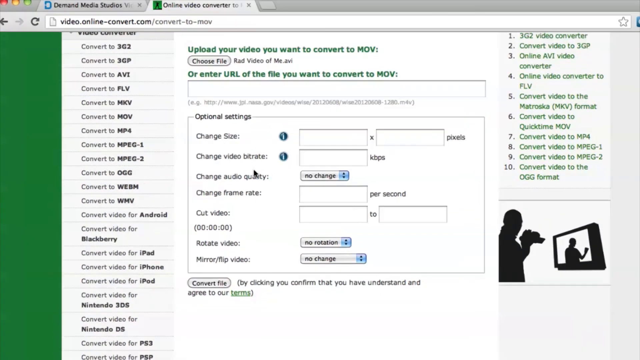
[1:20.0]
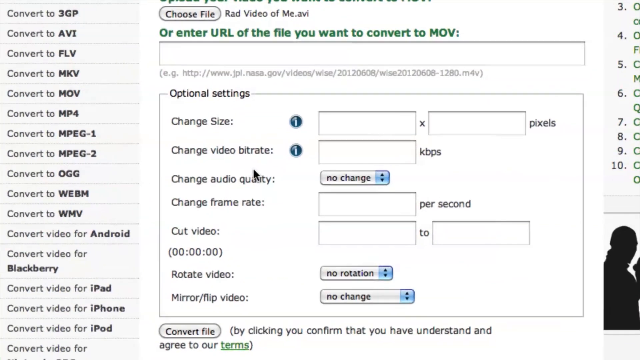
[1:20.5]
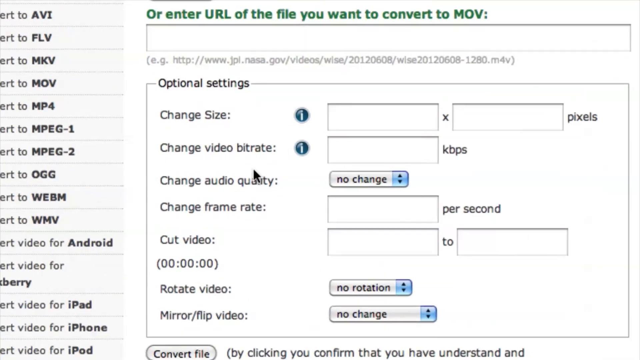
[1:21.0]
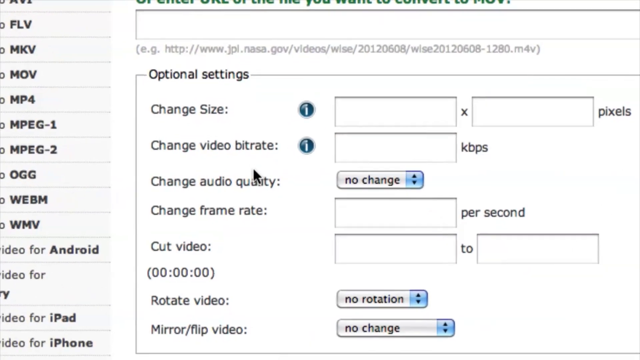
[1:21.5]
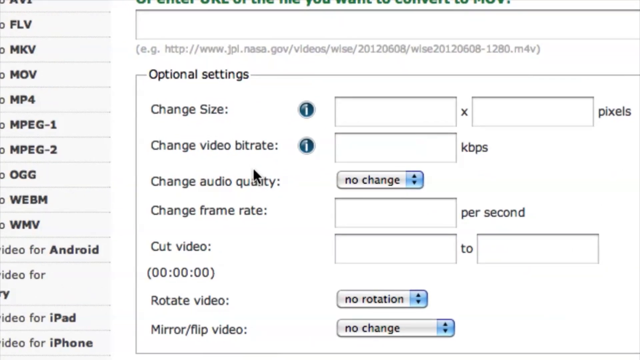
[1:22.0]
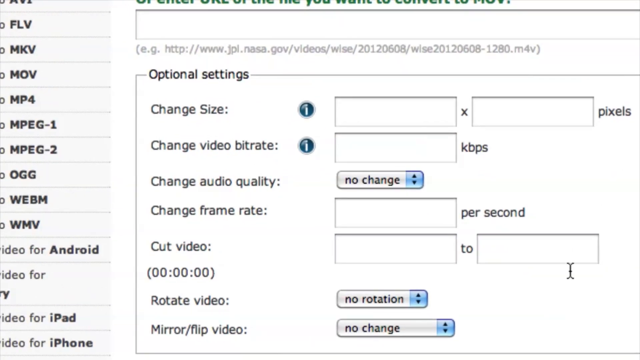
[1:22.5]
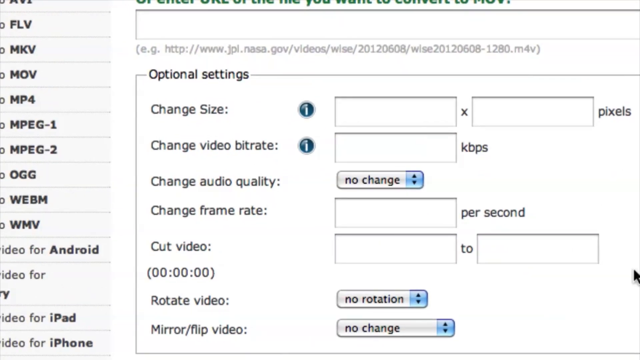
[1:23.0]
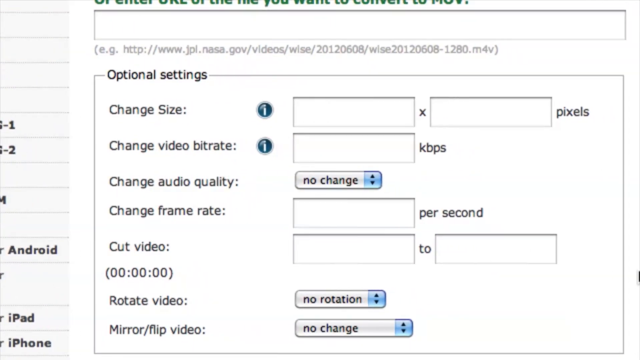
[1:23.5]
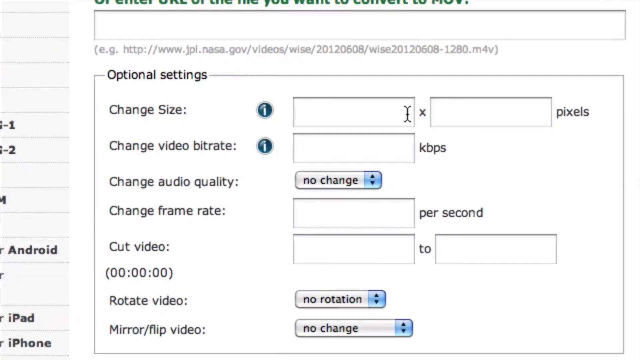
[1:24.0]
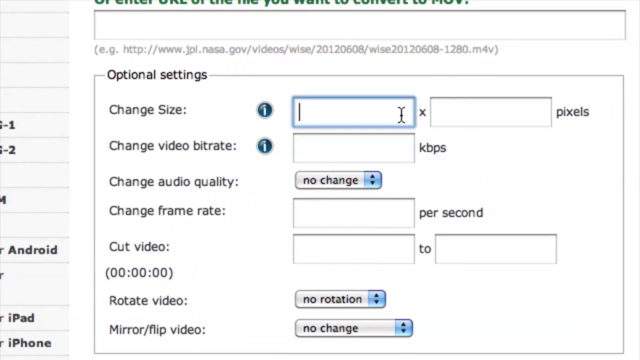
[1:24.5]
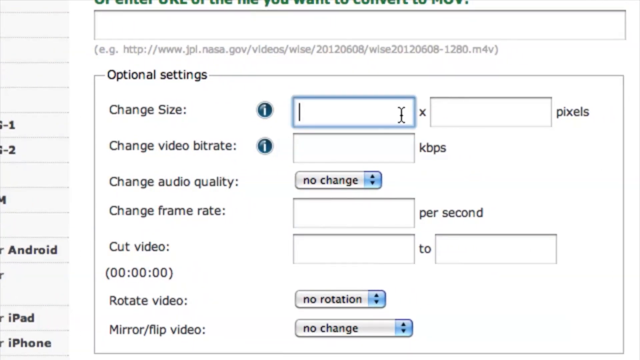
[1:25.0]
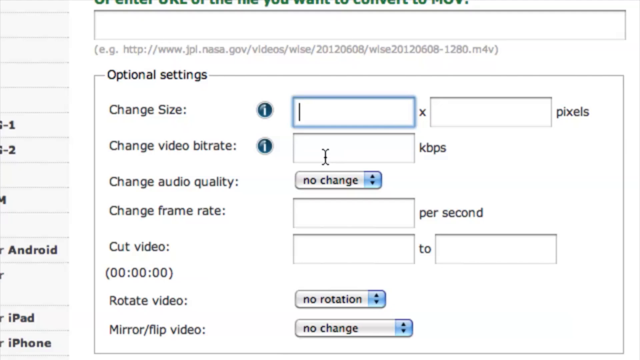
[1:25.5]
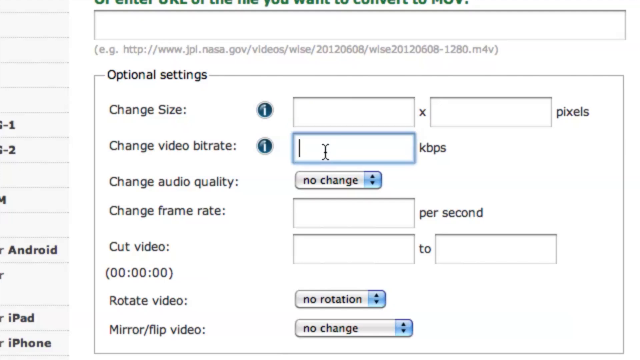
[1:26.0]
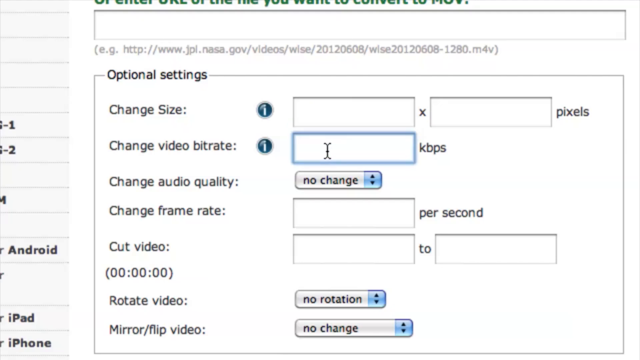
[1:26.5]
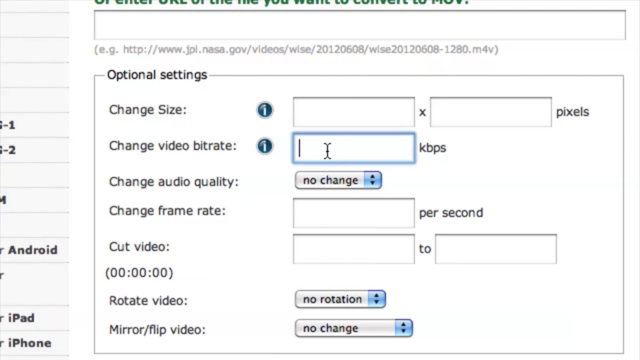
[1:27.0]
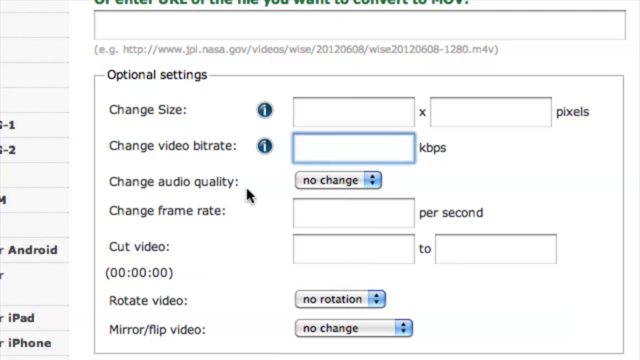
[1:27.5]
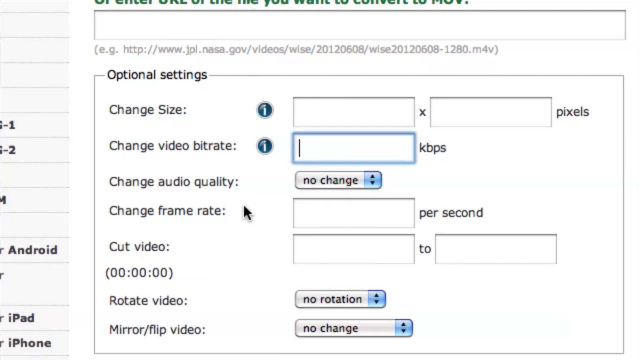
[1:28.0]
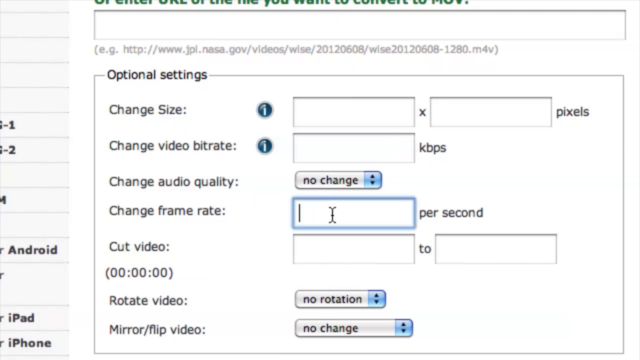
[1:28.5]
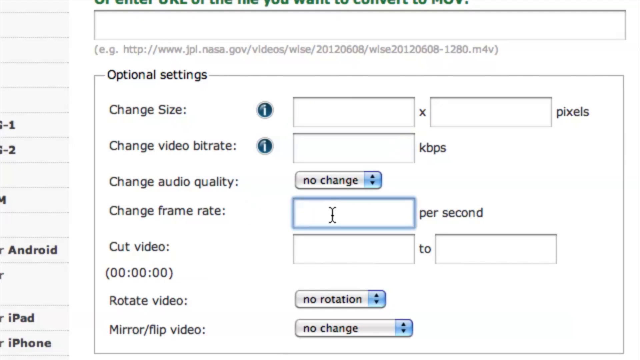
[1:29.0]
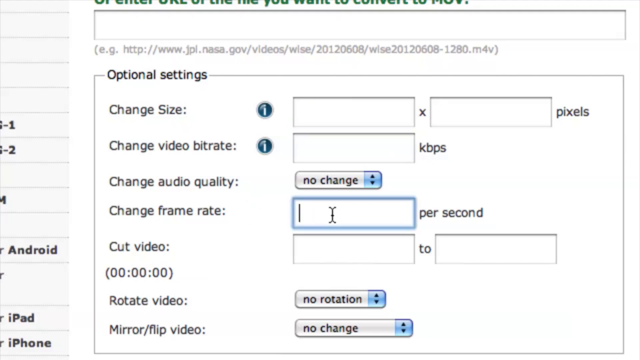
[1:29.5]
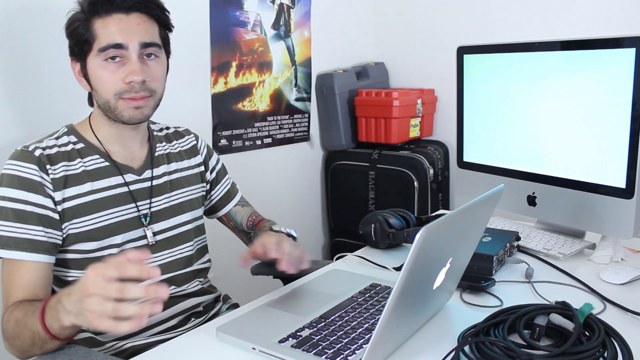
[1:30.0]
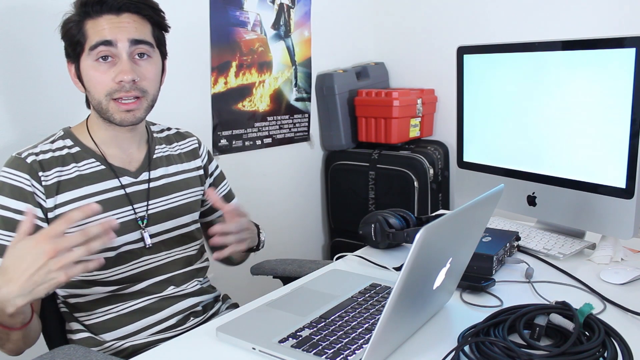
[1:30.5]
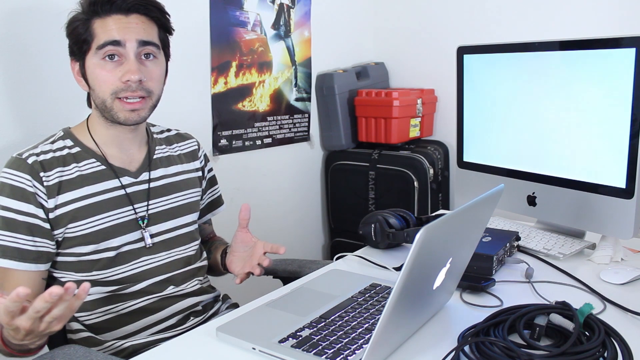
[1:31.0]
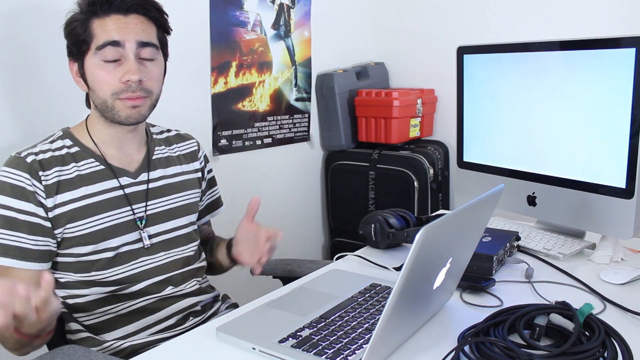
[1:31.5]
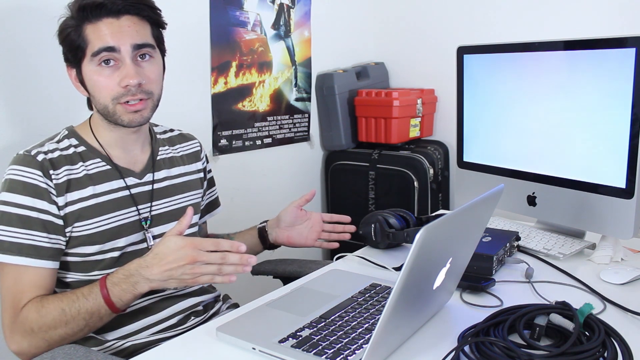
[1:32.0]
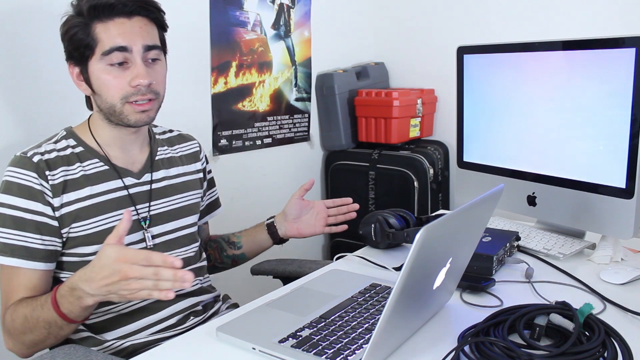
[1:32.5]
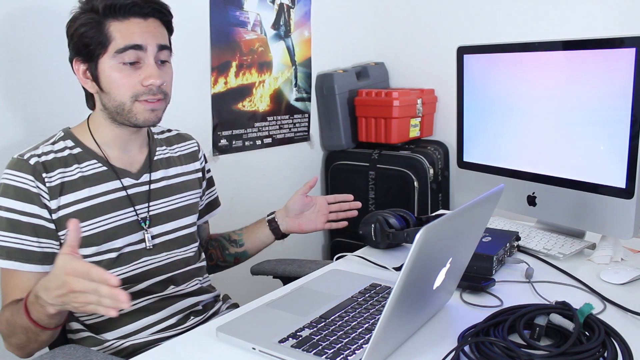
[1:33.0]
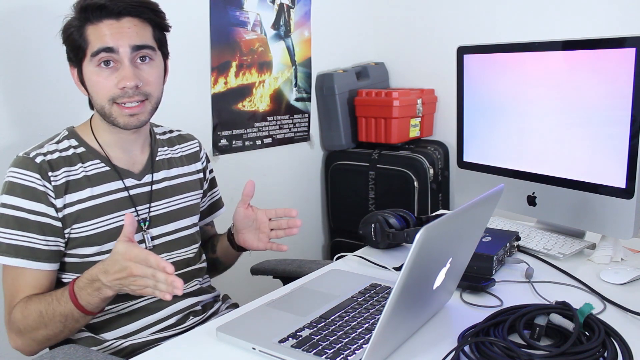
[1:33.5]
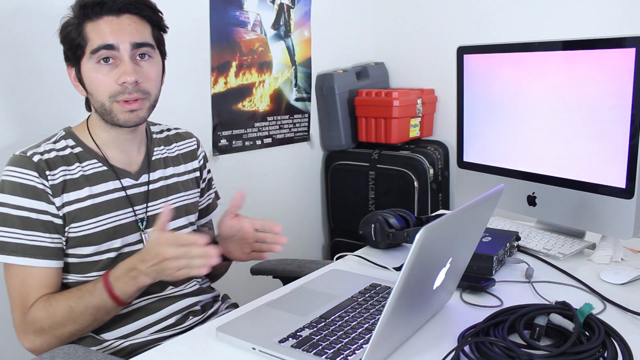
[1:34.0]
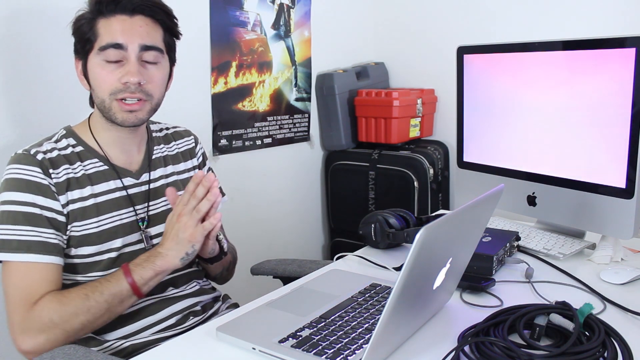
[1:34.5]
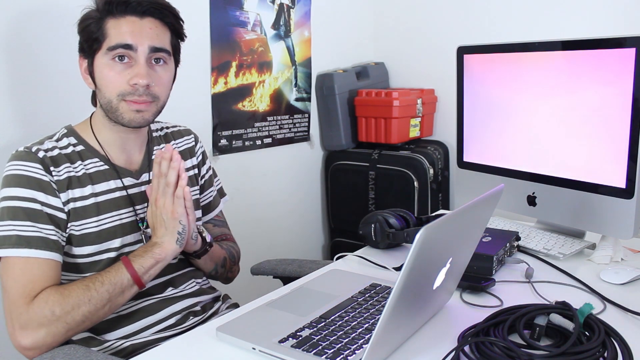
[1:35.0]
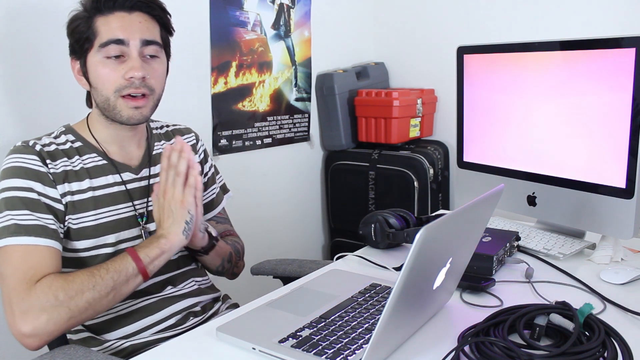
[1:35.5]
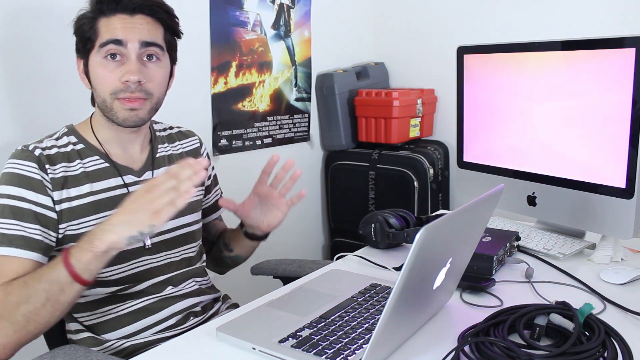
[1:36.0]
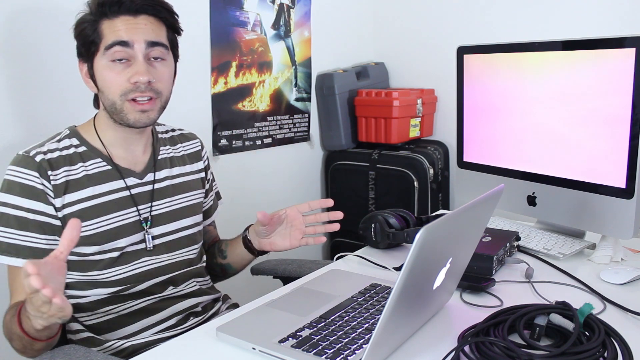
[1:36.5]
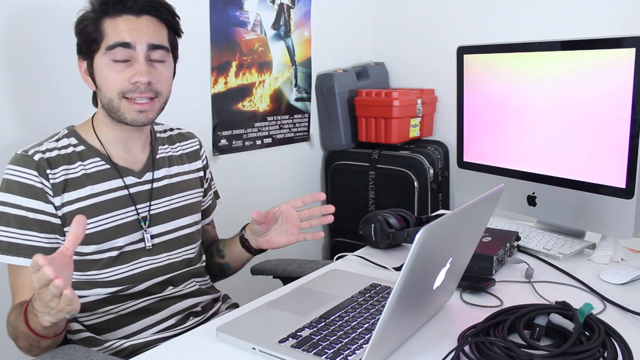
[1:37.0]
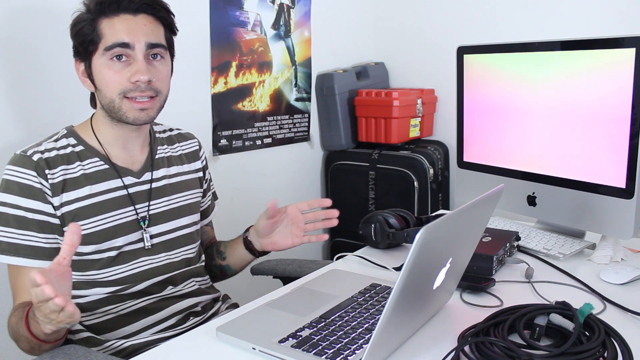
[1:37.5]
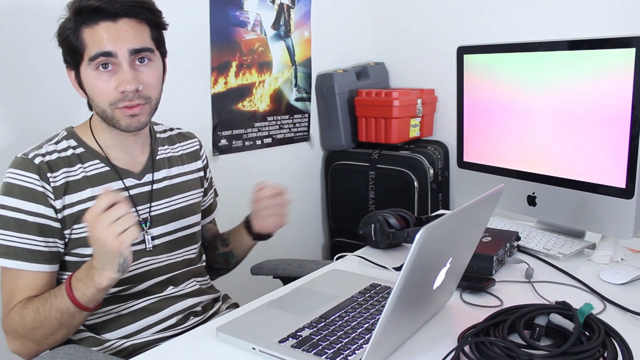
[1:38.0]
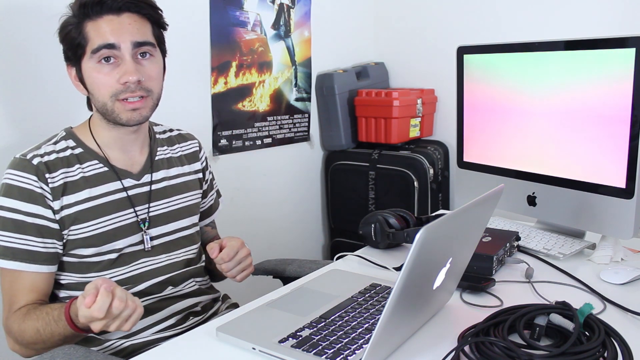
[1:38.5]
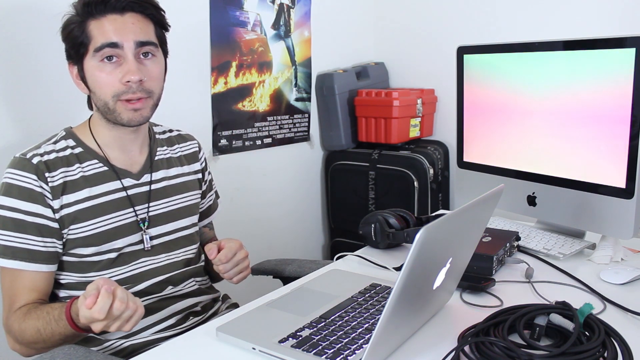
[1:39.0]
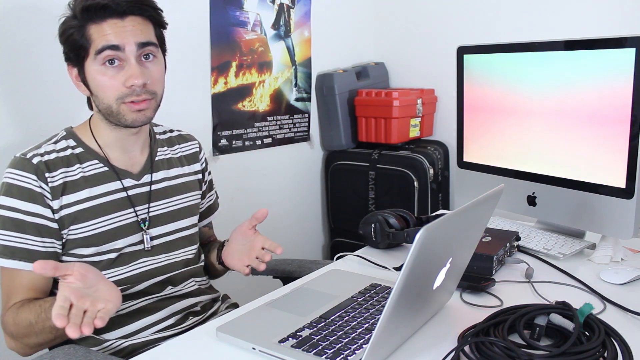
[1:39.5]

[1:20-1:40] The screen of a MacBook computer shows different file sizes and different files. Options show conversion to MOV, MP4 and many other file types, along with blank fields where a URL can be entered to convert.